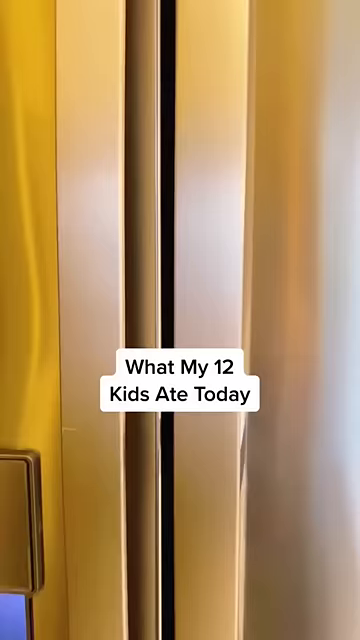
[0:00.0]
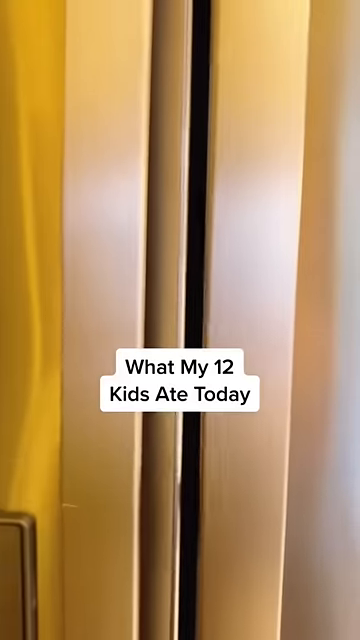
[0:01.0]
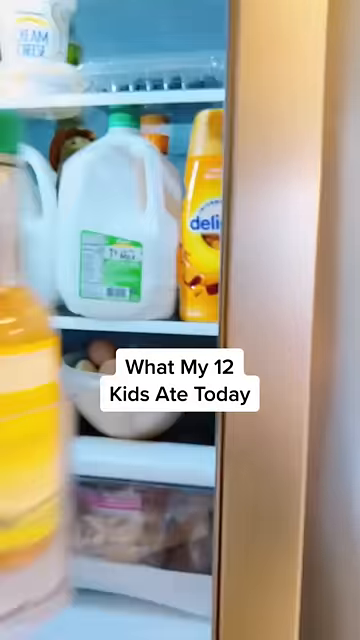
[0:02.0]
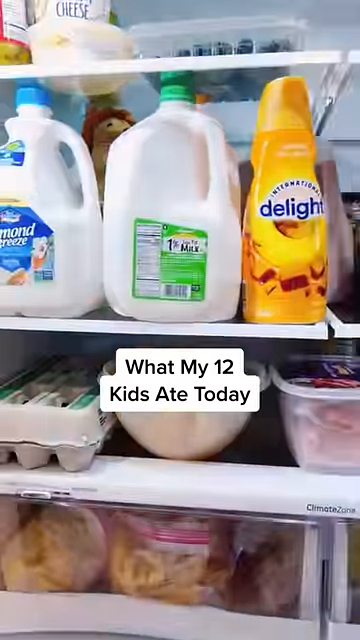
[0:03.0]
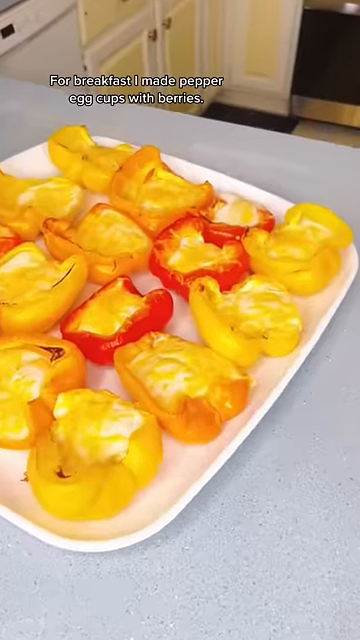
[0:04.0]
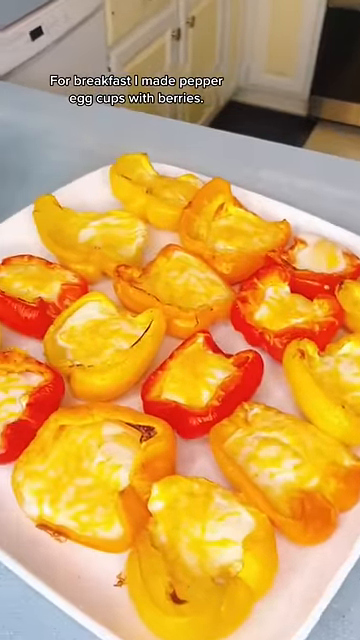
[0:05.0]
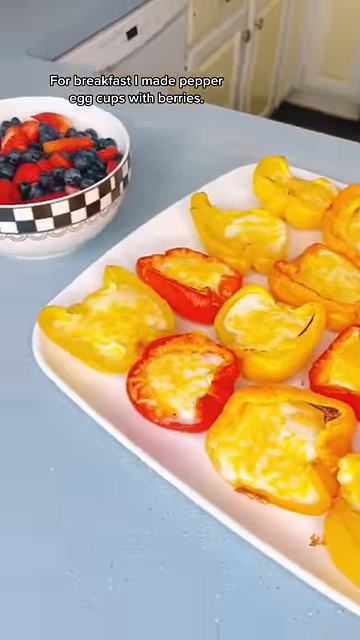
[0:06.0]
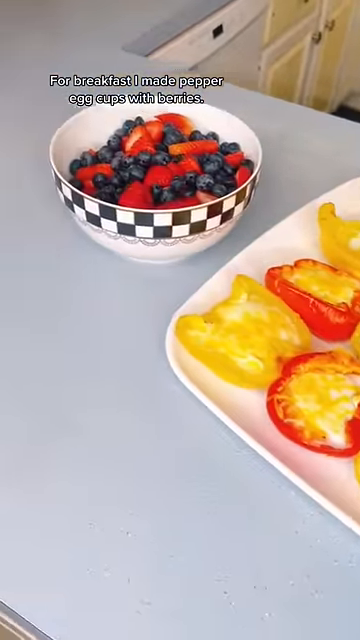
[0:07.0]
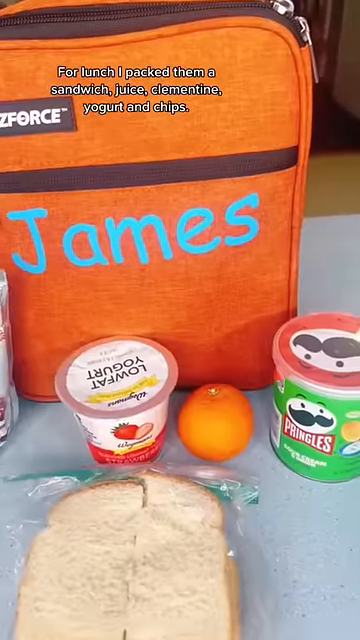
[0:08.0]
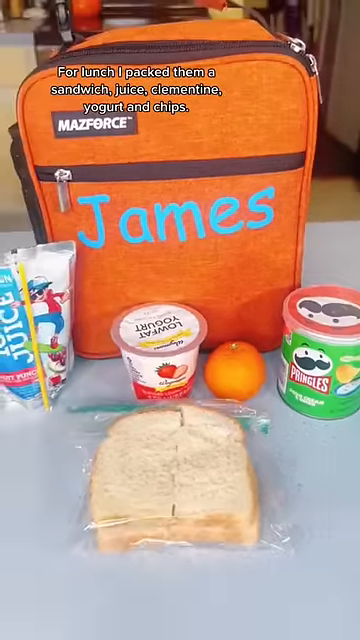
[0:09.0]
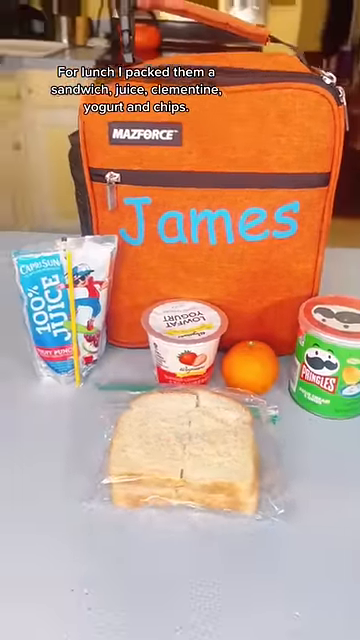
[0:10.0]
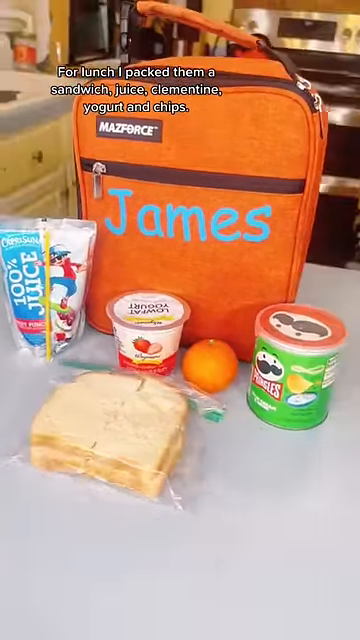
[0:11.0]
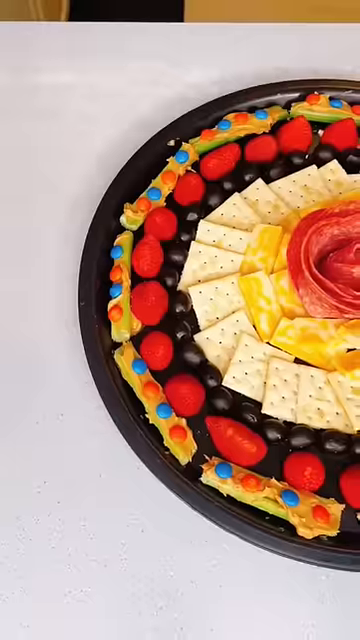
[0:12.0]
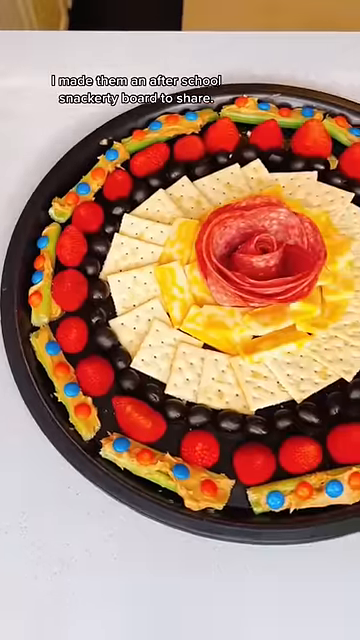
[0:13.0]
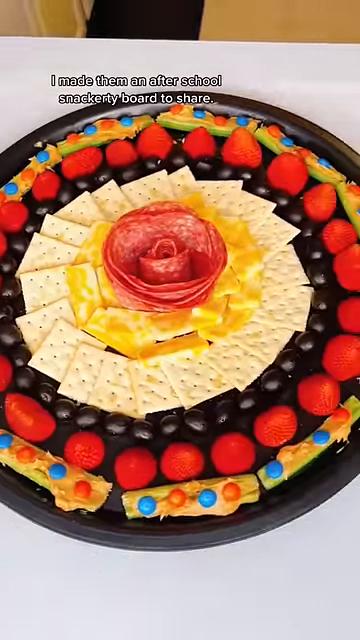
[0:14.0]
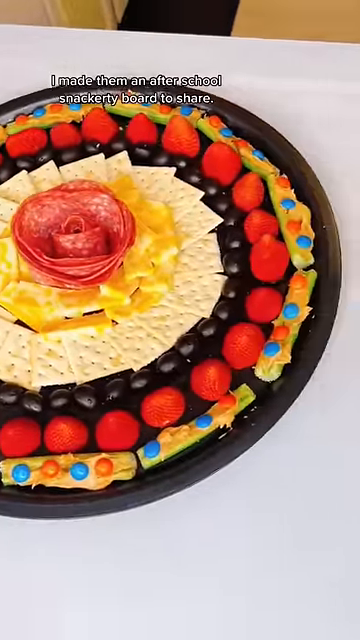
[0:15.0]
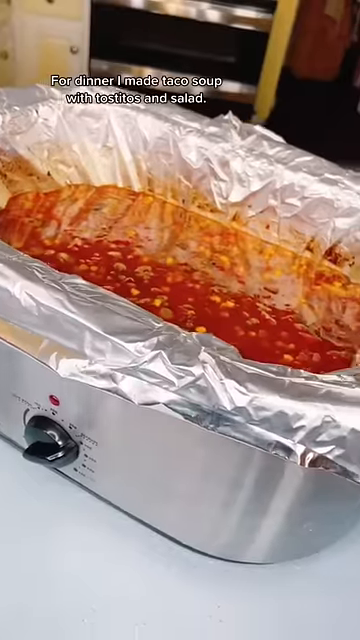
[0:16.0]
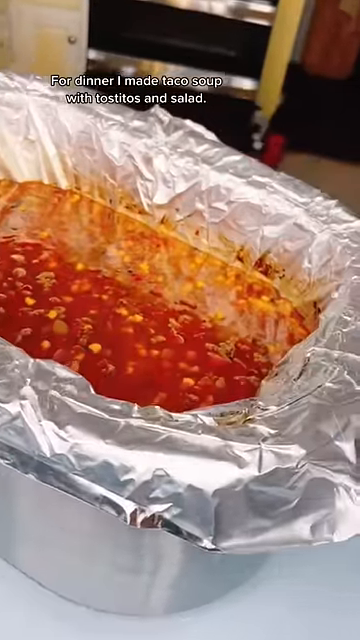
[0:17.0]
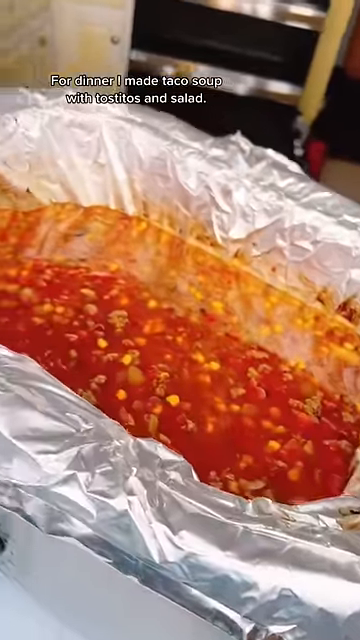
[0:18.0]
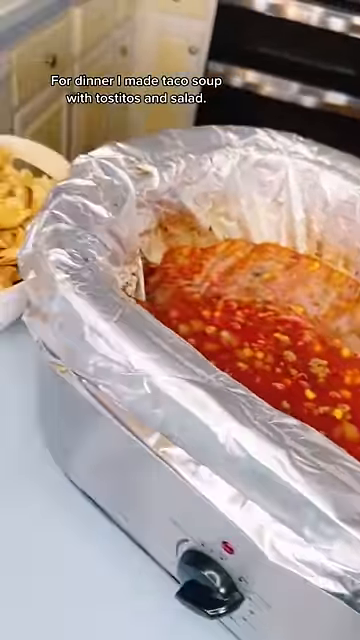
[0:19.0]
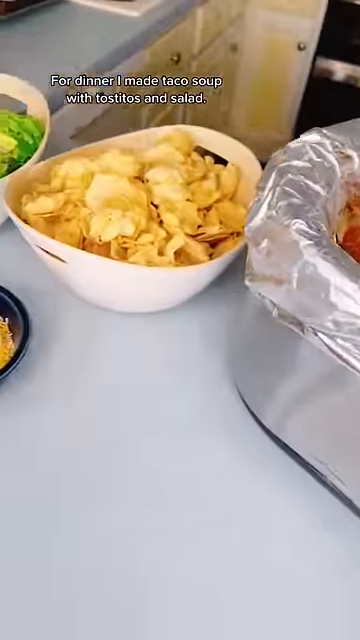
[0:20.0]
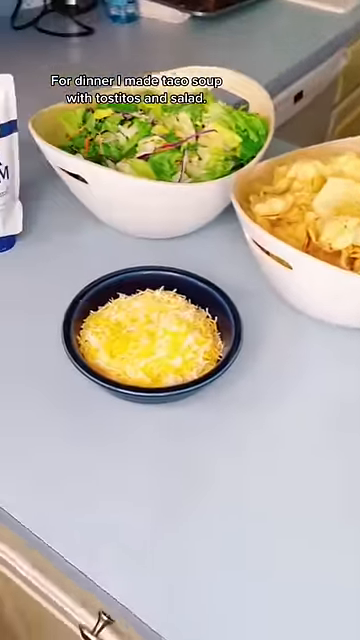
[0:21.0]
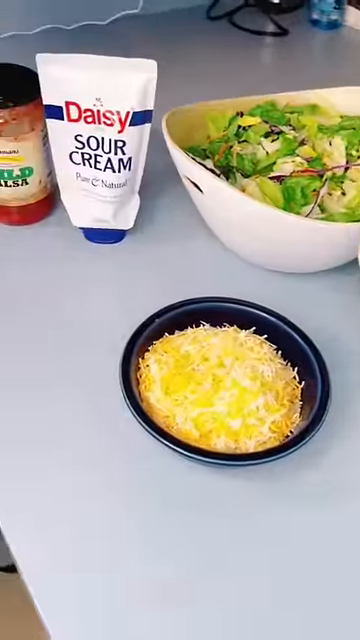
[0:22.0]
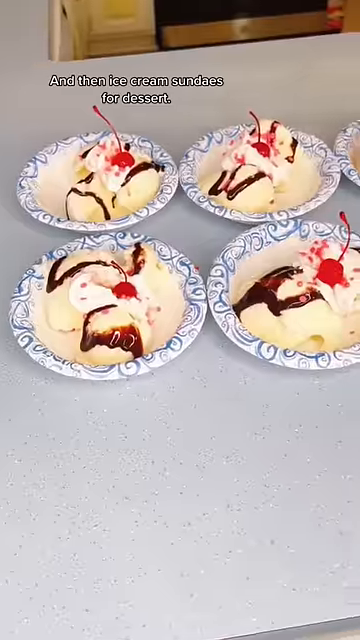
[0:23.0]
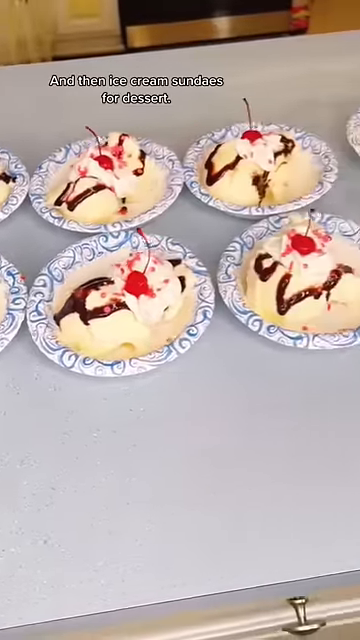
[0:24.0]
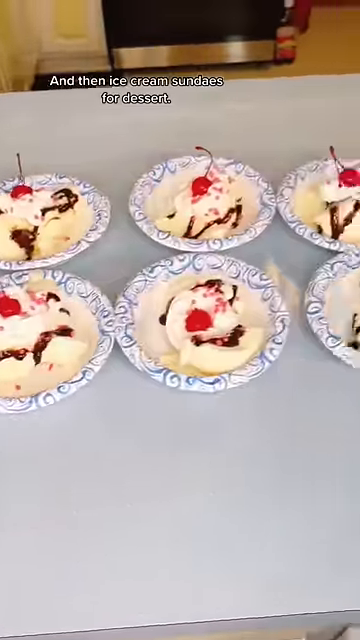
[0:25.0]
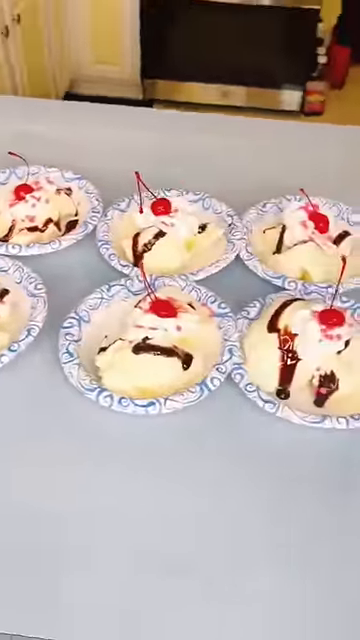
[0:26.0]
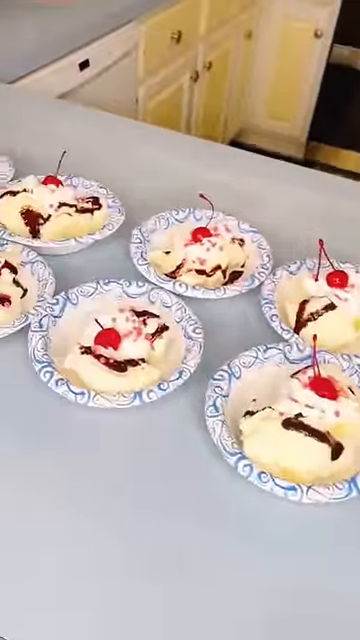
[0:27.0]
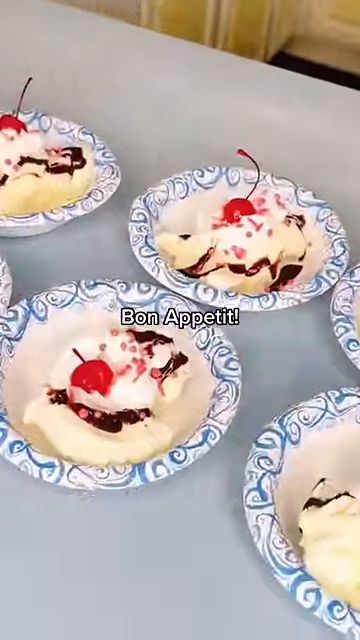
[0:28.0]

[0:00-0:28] The title reads "what my 12 kids ate today." A fridge is opened, showing different tubs of liquid: an Almond Breeze almond milk, 1% milk in the middle, and a Delight, like a coffee creamer, at the top. Underneath are a couple of tubs whose contents cannot be made out, and to the left of the tub is a carton of eggs. Next, it looks like someone has cooked peppers in the oven: orange and red peppers, cut so each is half a pepper, with cheese on top, on a white plate. Text says "for breakfast I made pepper egg cups with berries," and a bowl of strawberries and blueberries is shown. Then text reads "for lunch I packed them with a sandwich juice clementine yogurt and chips," and there is a clementine, a short canister of Pringles, some yogurt, a juice box, and a sandwich in something clear. The lunch bag says "James," written in blue, and the view kind of rotates a little. Next comes a snack board: in the middle it looks like there are assorted salami meats, with Colby Jack slices around that and saltine crackers around those in a circular fashion. There are either dark berries or chocolate-covered nuts of some kind, and raspberries around them, plus something sour with peanut butter and M&Ms on top. Then a large crock pot full of some kind of chili is shown, along with salads such as a bowl of salad, some chips, sour cream, and salsa. Finally there are a bunch of plates of sundaes for the 12 kids.